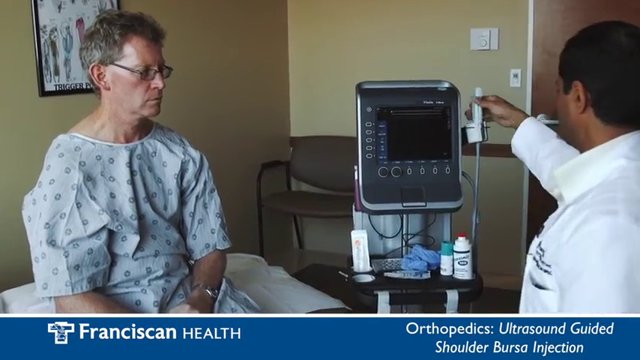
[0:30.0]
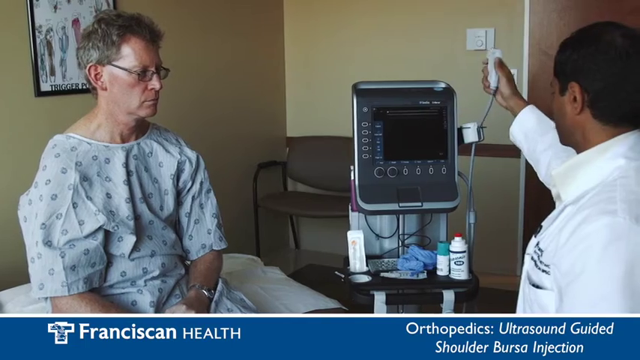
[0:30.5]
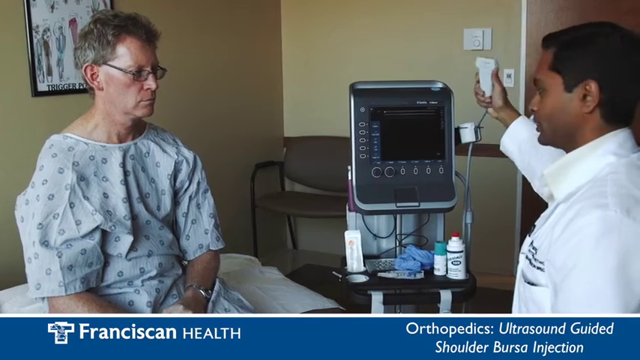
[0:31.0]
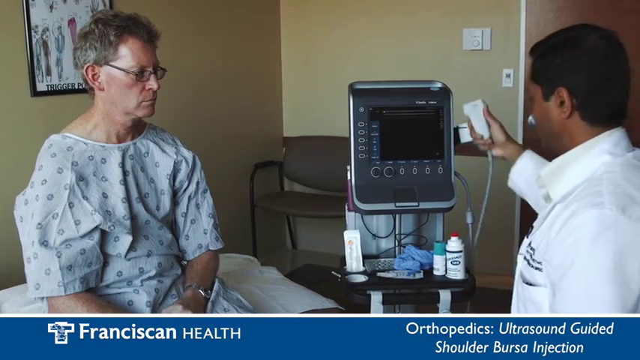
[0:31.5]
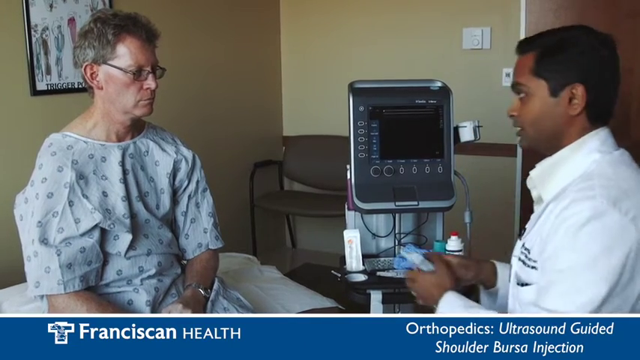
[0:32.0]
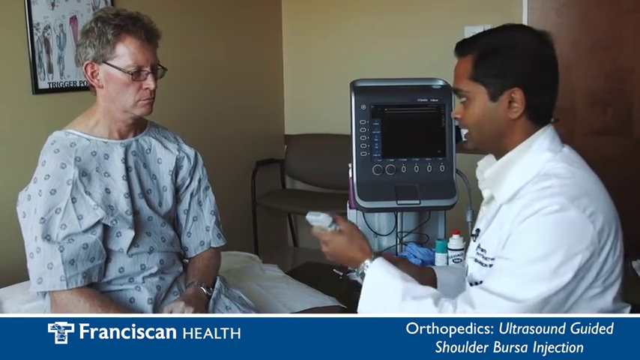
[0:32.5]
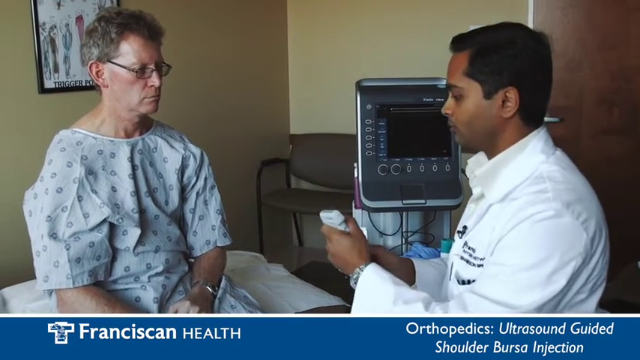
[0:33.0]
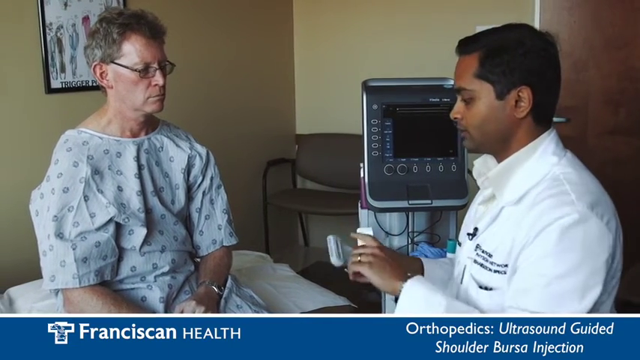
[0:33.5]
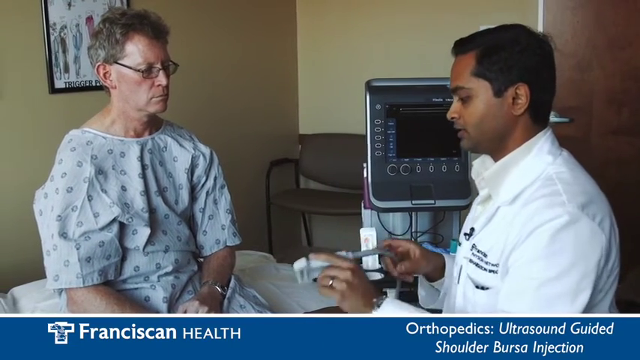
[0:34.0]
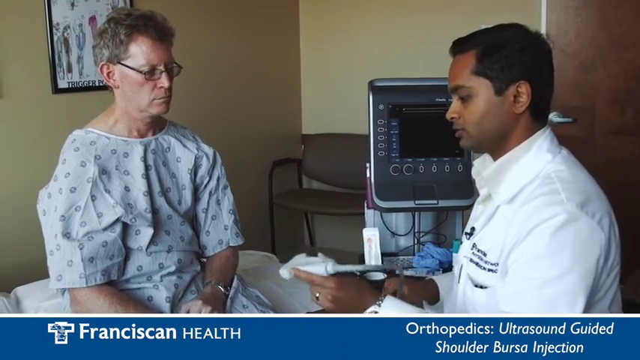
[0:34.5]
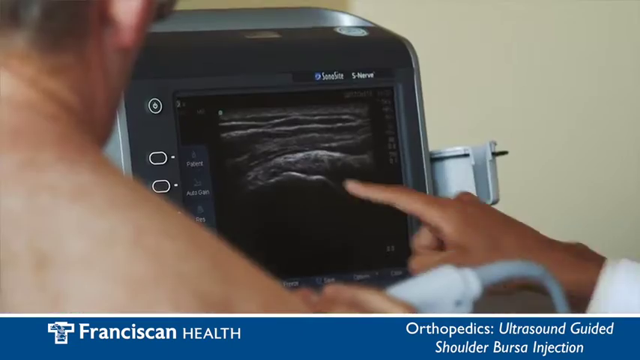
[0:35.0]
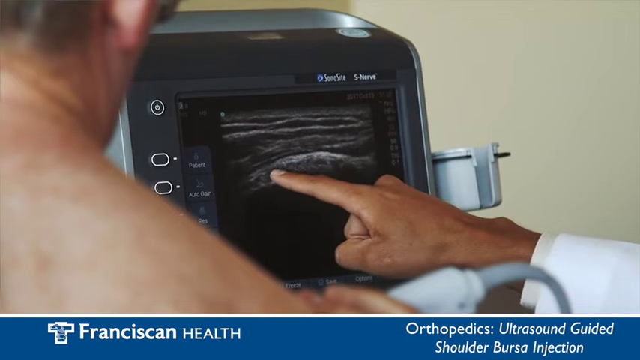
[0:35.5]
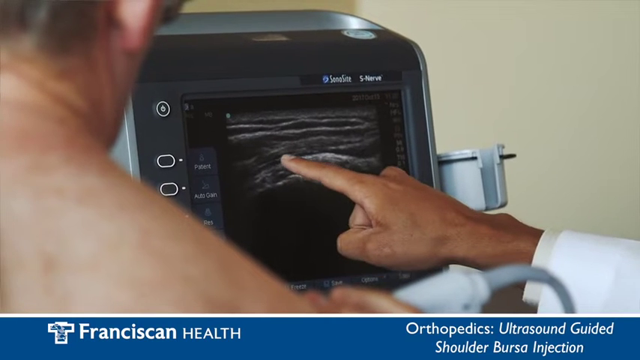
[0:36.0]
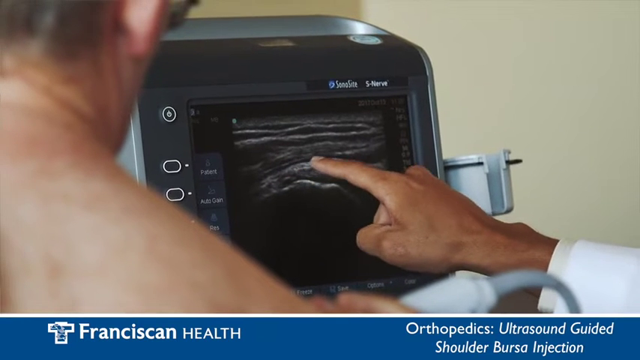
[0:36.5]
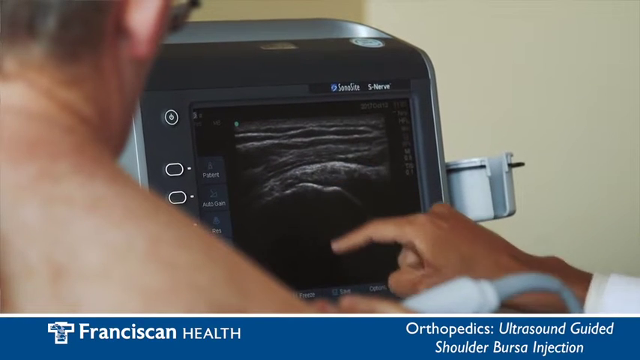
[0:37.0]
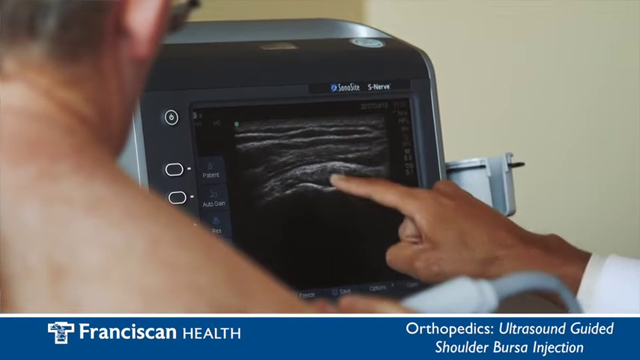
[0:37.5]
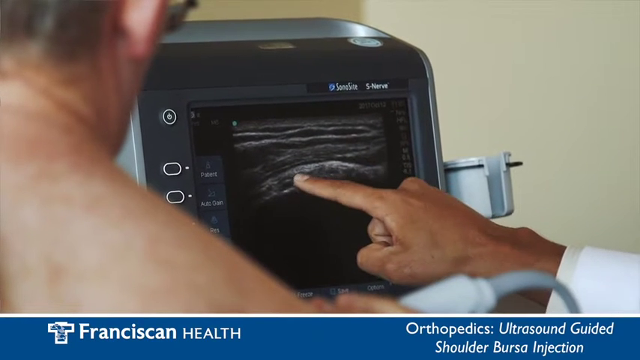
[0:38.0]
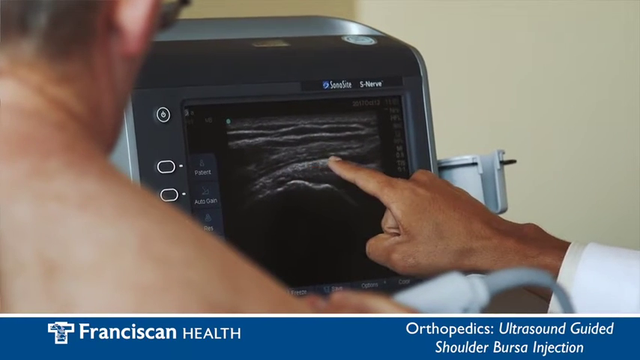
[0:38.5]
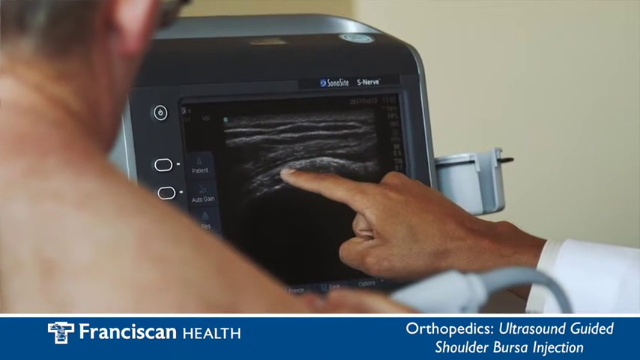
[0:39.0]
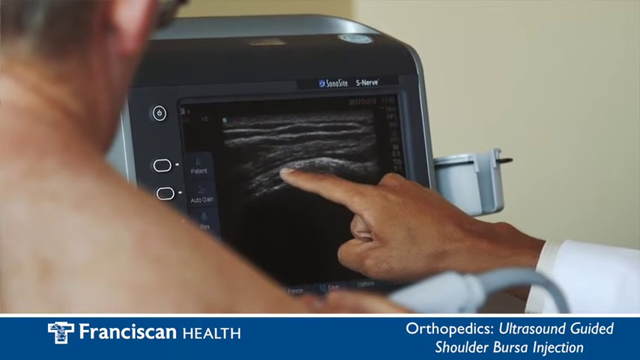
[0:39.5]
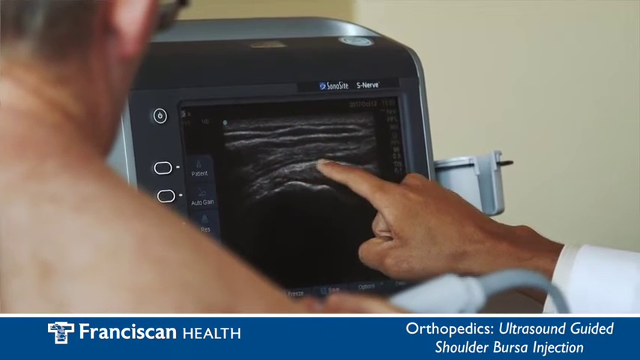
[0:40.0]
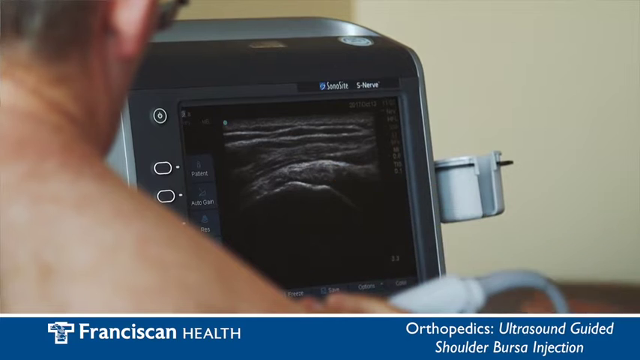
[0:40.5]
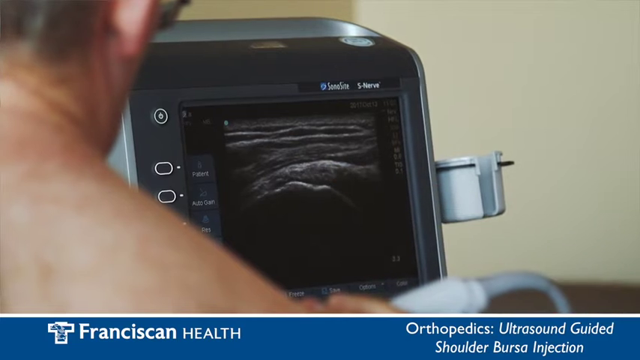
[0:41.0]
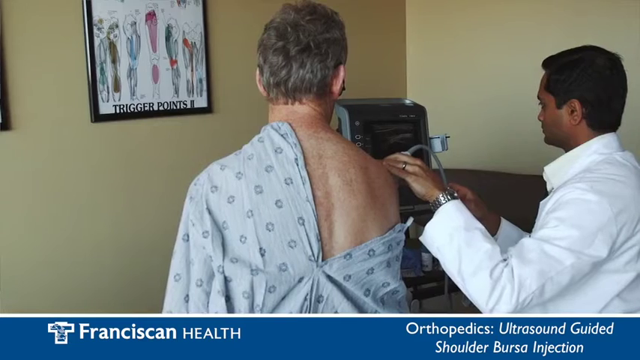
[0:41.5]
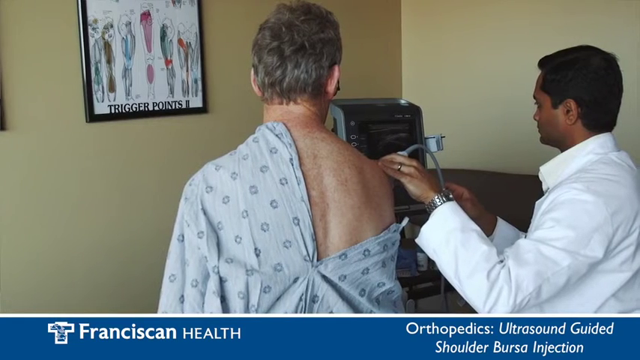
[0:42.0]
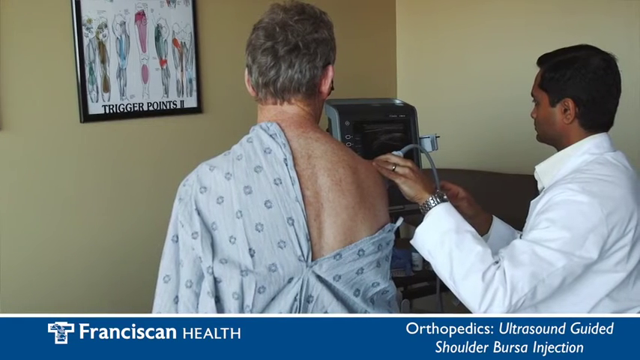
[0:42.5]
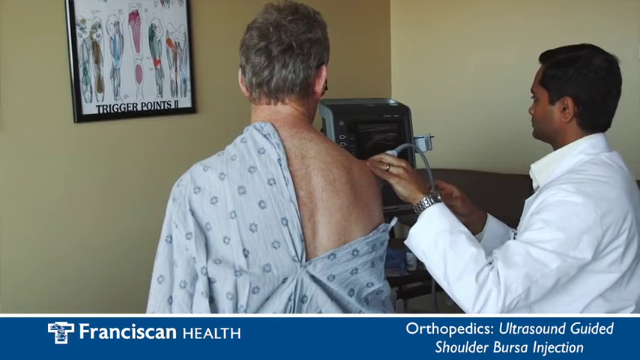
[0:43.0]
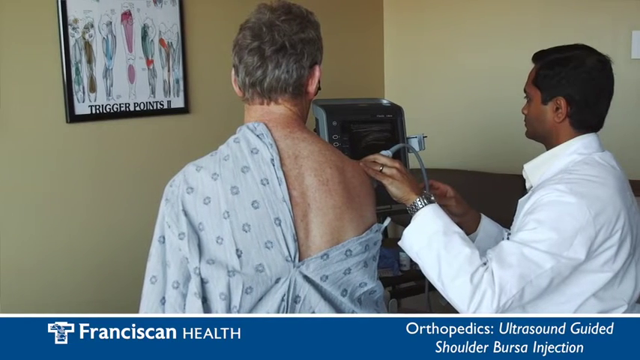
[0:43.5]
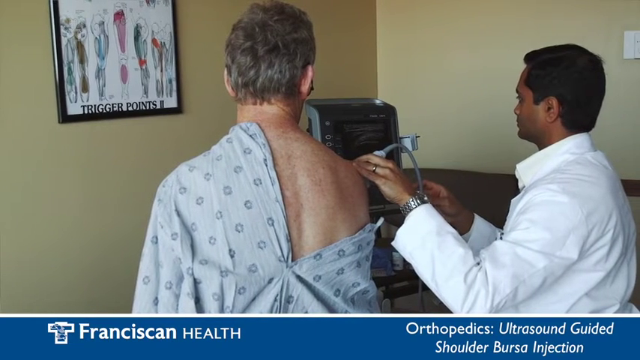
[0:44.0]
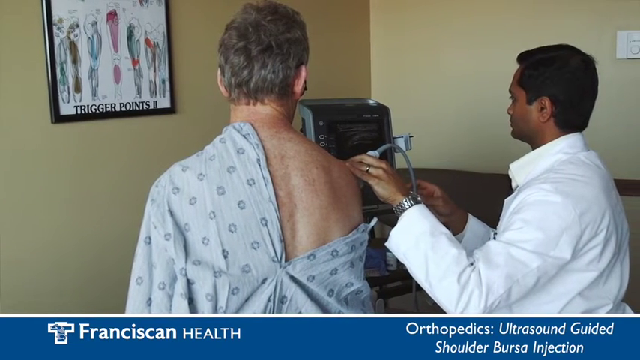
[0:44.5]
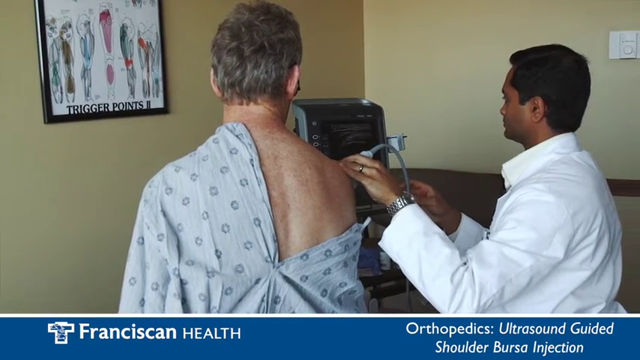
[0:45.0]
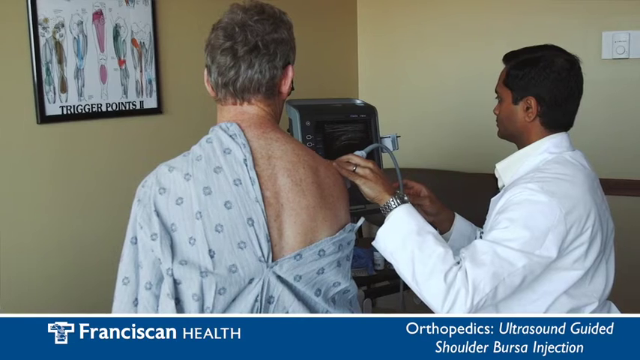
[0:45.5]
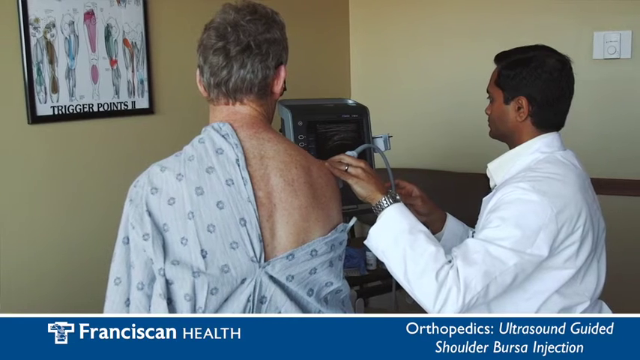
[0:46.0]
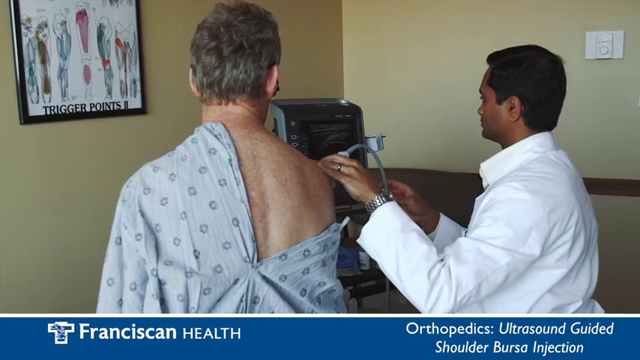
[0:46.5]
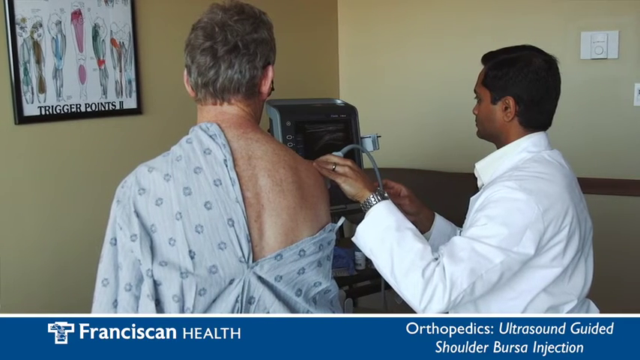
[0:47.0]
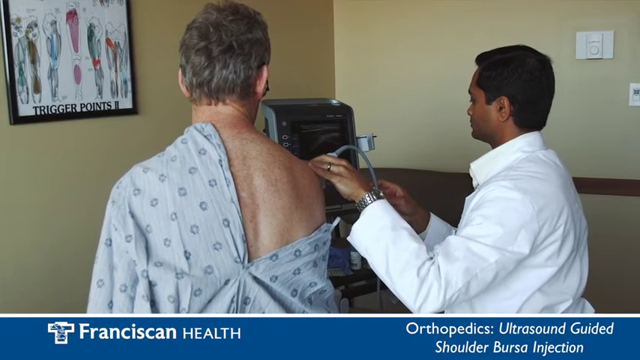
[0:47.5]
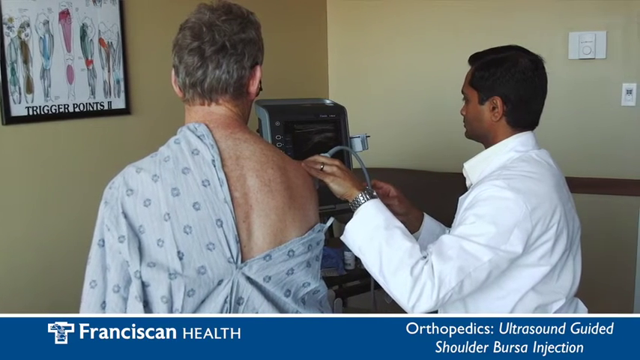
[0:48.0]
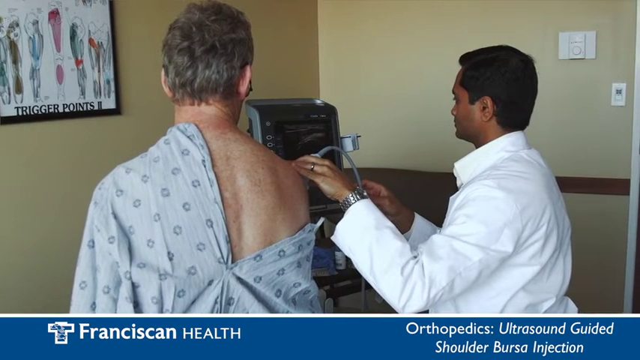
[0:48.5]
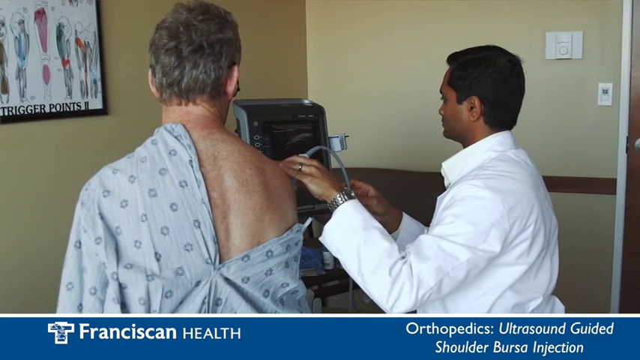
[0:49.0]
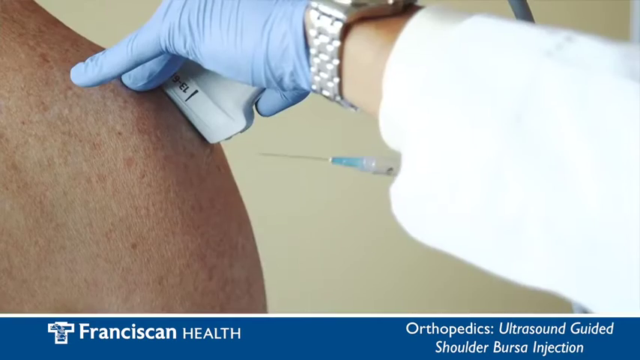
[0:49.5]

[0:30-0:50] The doctor holds up the part of the machine he touches to the patient's skin, which looks to be some type of scanner. The camera zooms in on the screen, which is mostly black with some white and gray lines and shading, as the doctor uses the small scanner on the patient's shoulder and points at the screen with his right index finger. On the left side of the screen are some buttons; the machine is white with a gray front and the black screen in the front. A blue banner at the bottom reads "Franciscan Health Orthopedics Ultrasound Guided Shoulder Bursa Injection." The camera pans slightly around the room before zooming in on the patient's shoulder, where a needle is preparing to go in. The doctor wears a ring on his left hand, and the room is painted beige or a cream color.